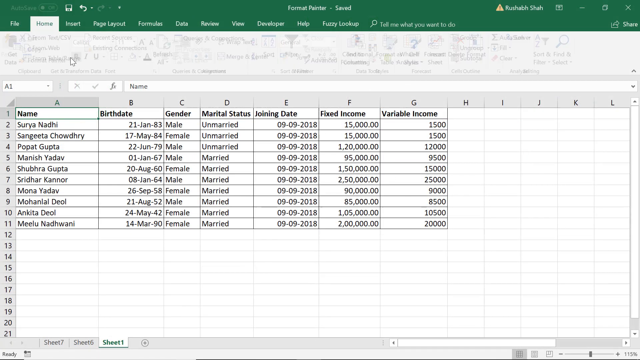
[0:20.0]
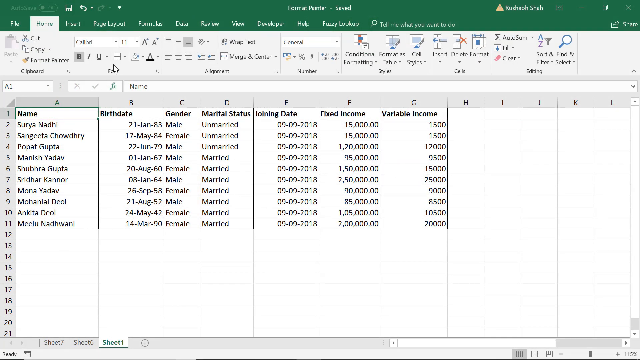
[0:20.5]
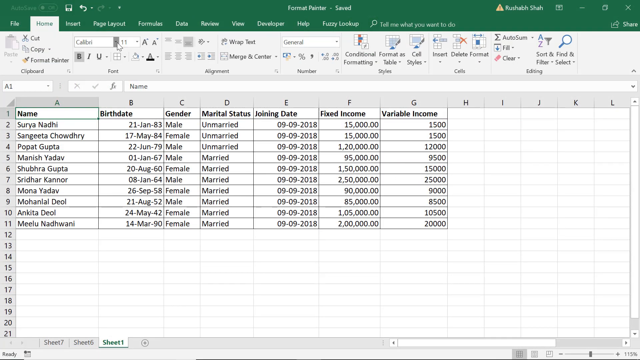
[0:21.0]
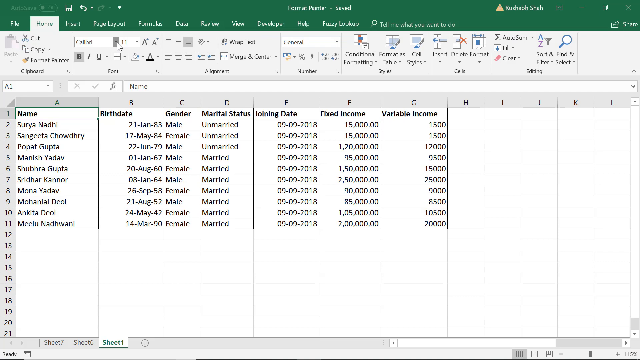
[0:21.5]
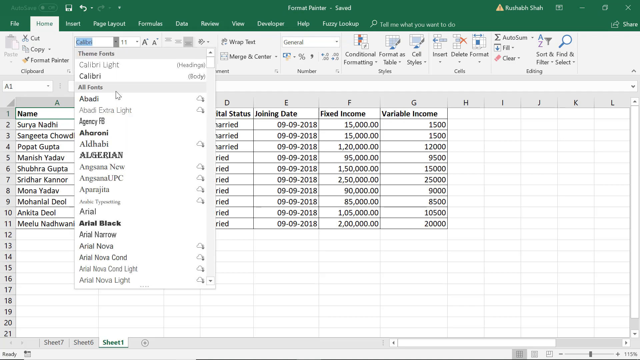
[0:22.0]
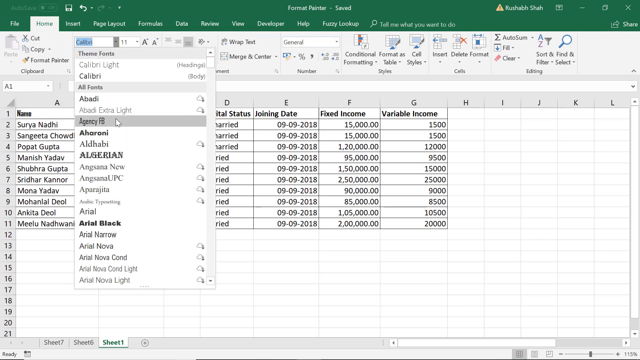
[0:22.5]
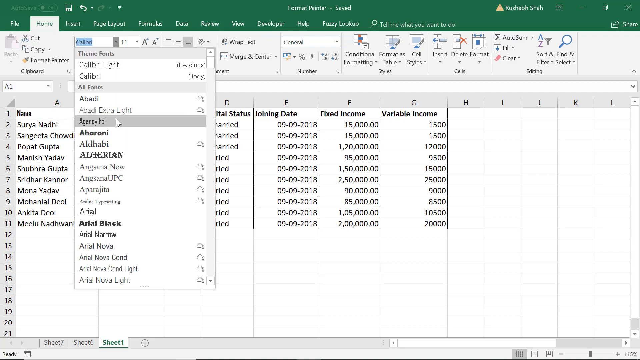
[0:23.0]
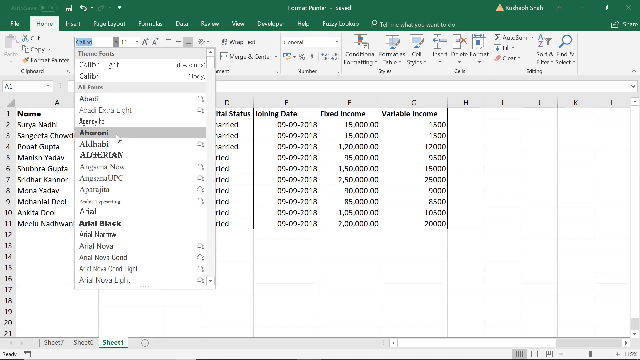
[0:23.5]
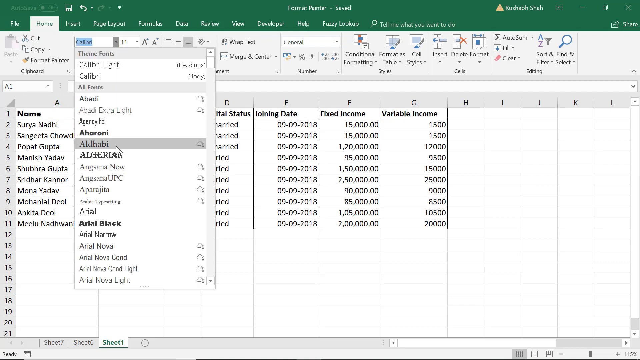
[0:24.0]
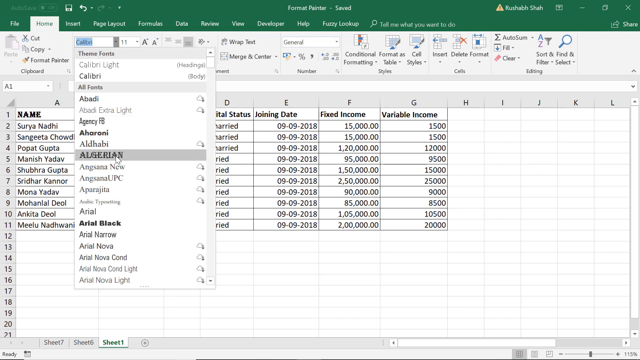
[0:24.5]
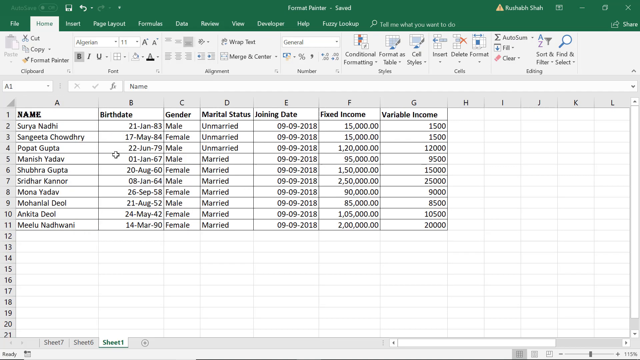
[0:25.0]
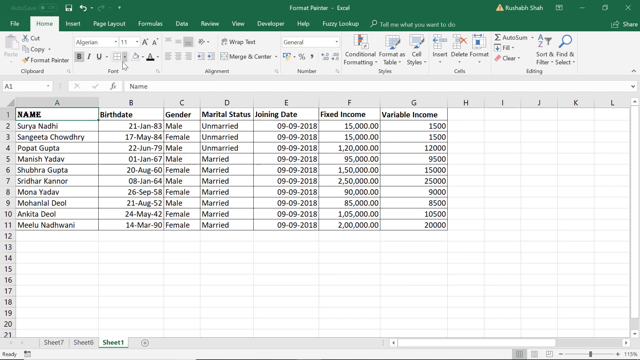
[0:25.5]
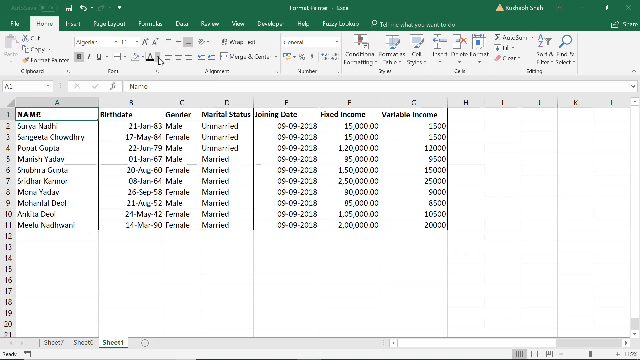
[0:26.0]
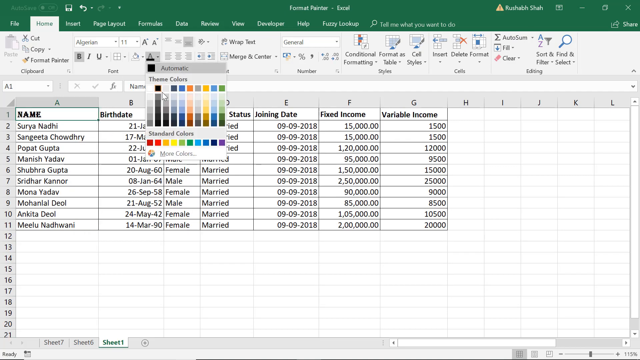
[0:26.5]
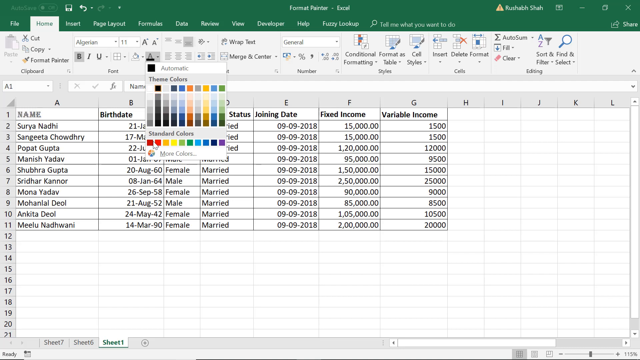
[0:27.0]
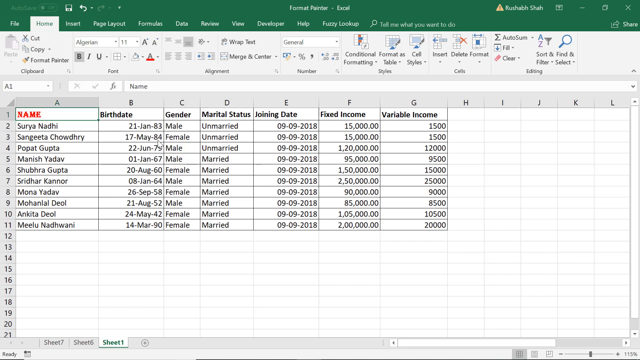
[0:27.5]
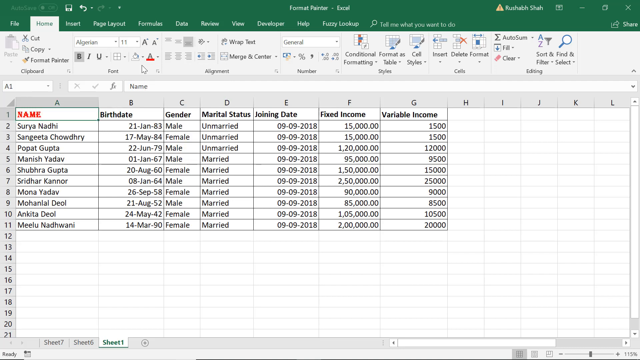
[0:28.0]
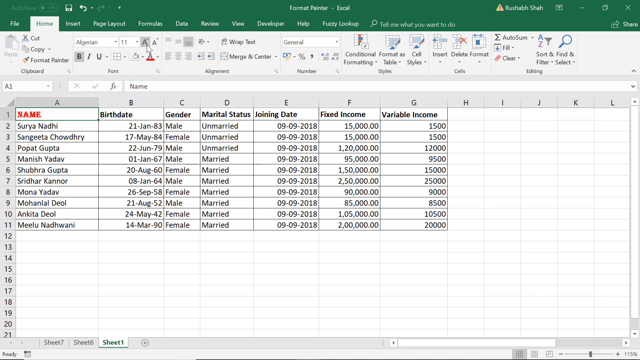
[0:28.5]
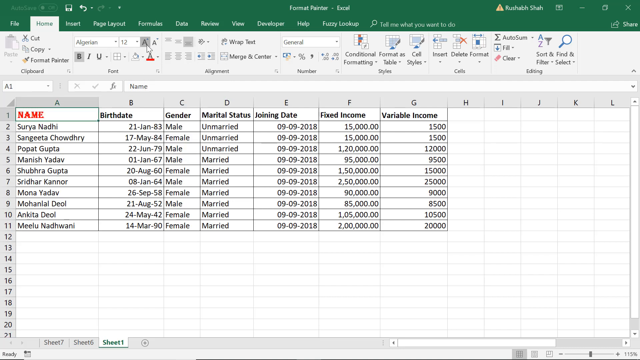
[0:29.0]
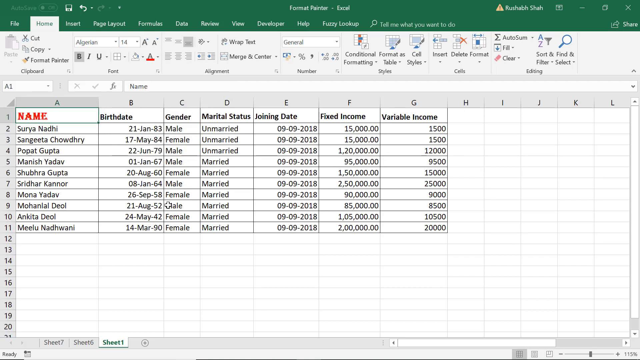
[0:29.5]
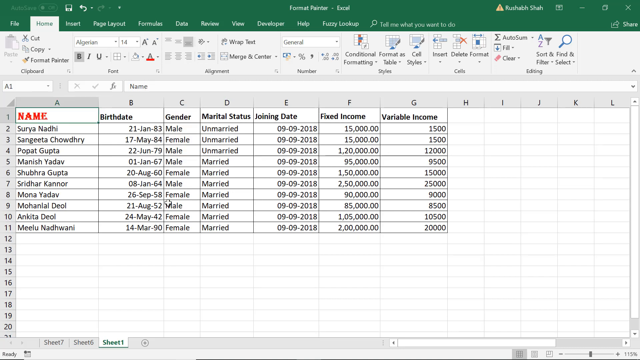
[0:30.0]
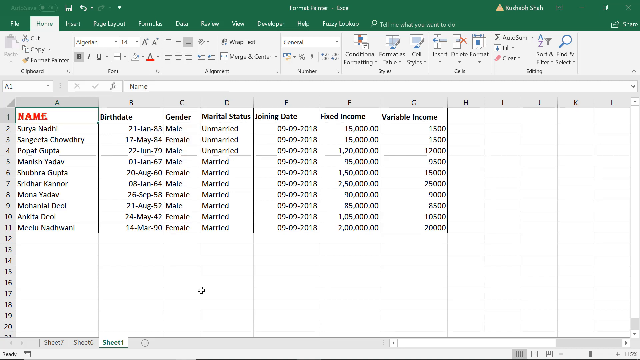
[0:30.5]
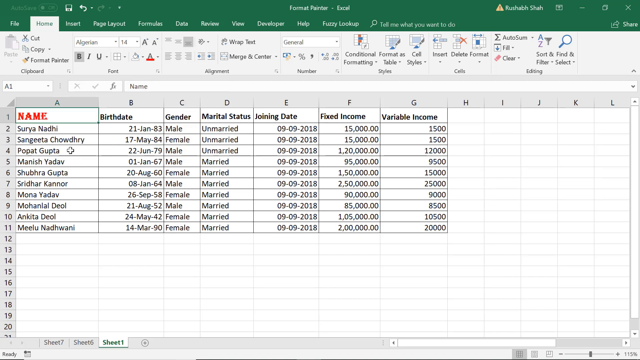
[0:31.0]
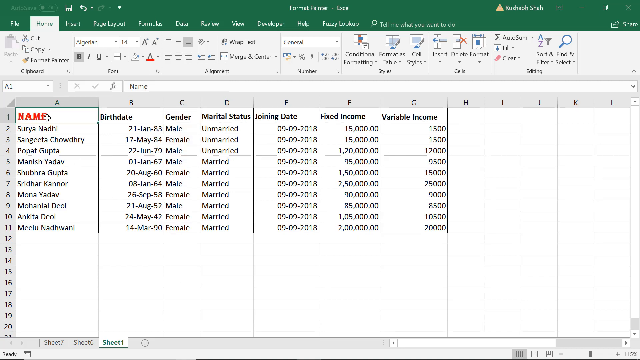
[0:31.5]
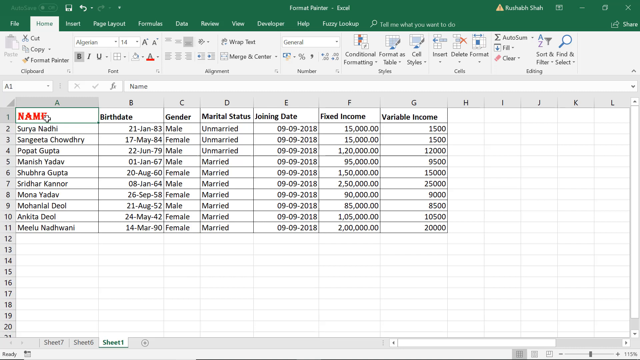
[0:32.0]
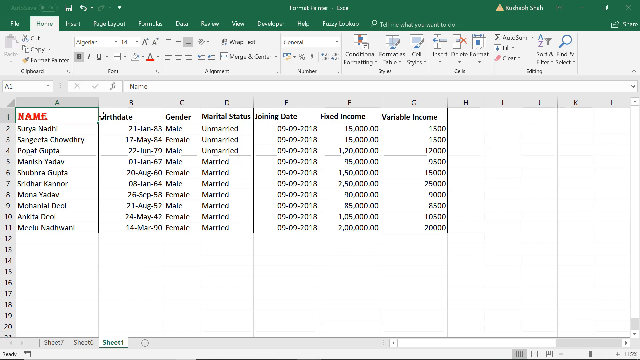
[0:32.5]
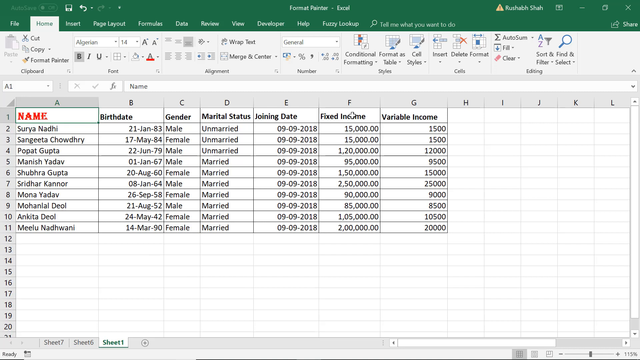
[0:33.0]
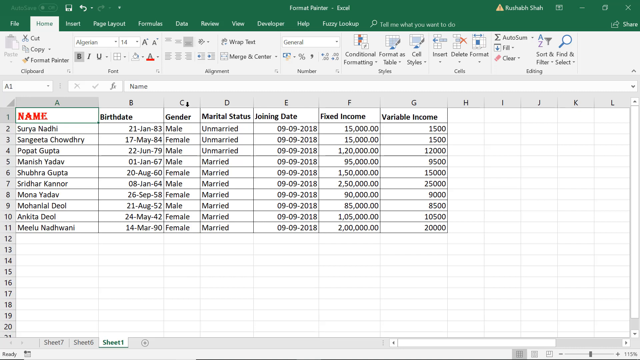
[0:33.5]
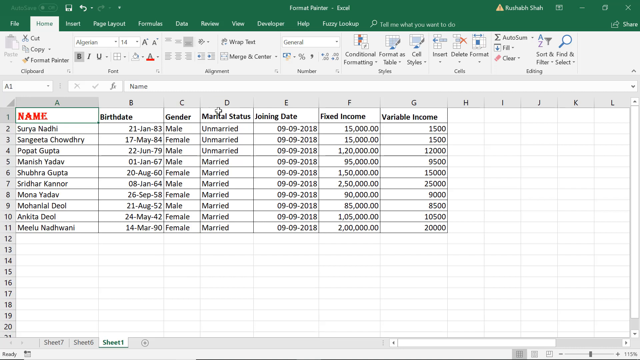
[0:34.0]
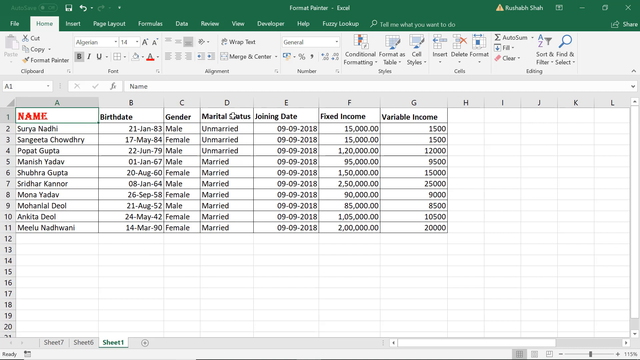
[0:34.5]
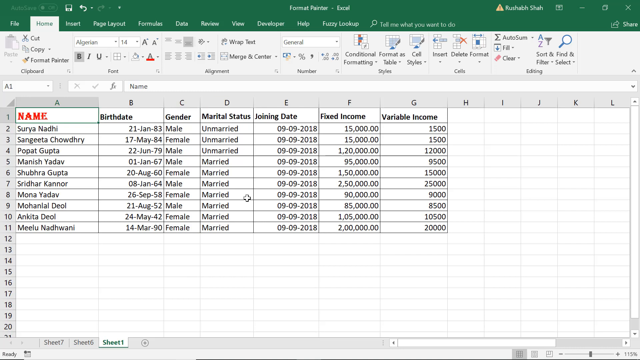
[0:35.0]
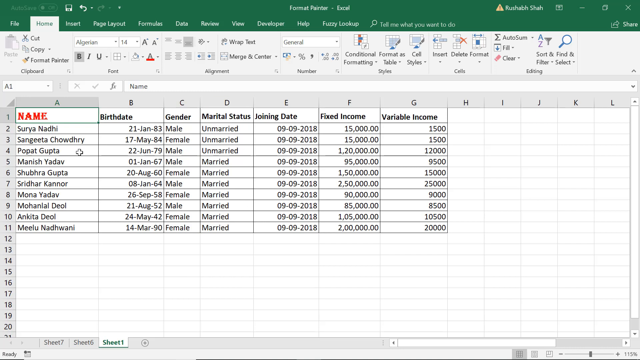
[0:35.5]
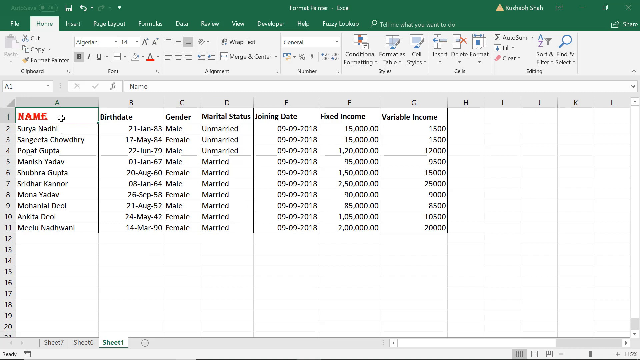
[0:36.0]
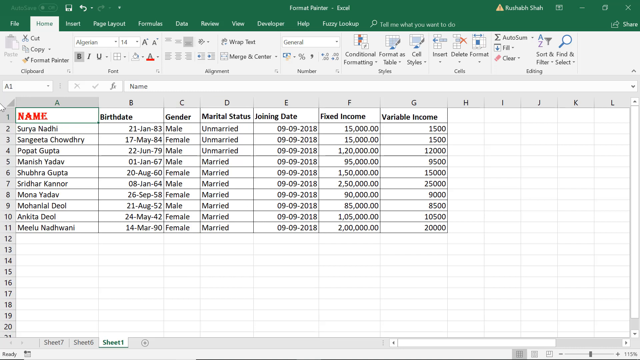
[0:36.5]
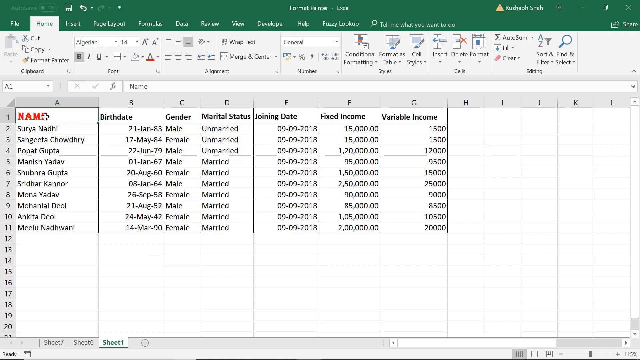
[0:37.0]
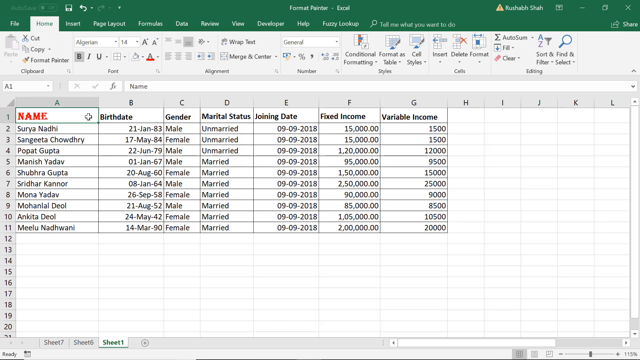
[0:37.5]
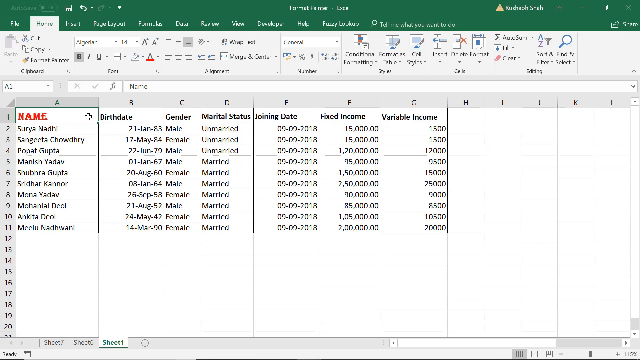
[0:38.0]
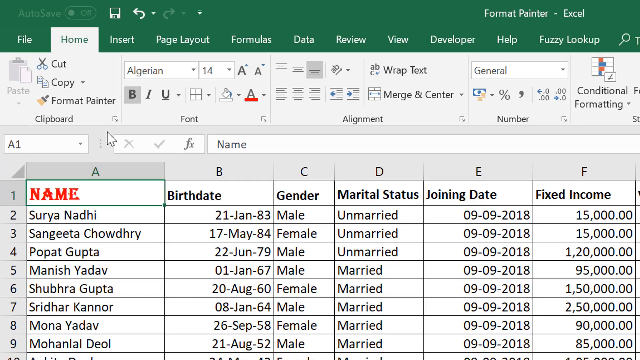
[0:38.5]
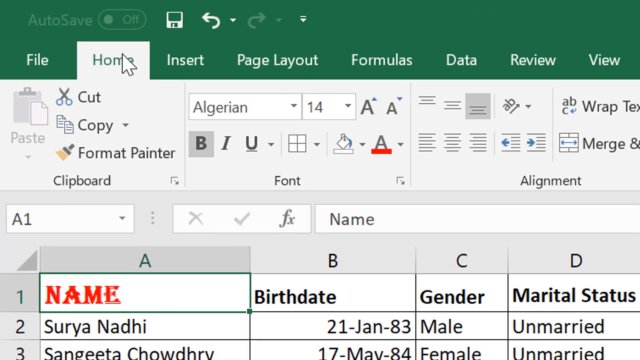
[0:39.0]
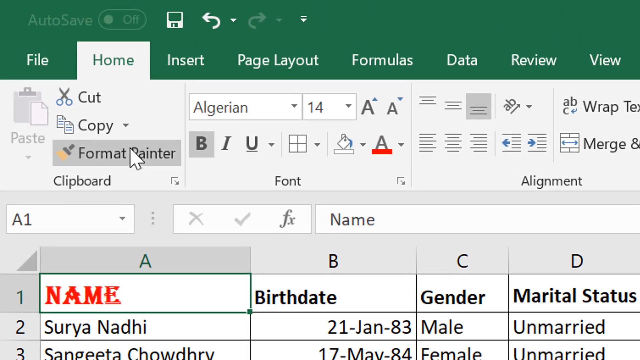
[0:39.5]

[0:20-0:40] The Excel spreadsheet is open, with columns going up to G and 11 rows. Across row 1 the headers are: A, name; B, birthdate; C, gender; D, marital status; E, joining date; F, fixed income; and G, variable income. Below are the names of some individuals, with their information listed in the columns. The user selects a font, choosing Algerian, then selects a color, choosing red. The name column header changes to a larger red font. The user then clicks Format Painter again, seemingly making changes to how the sheet looks and maybe using Format Painter to add color to certain words in the table.